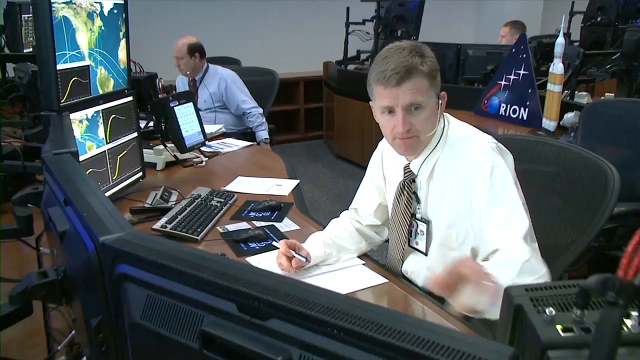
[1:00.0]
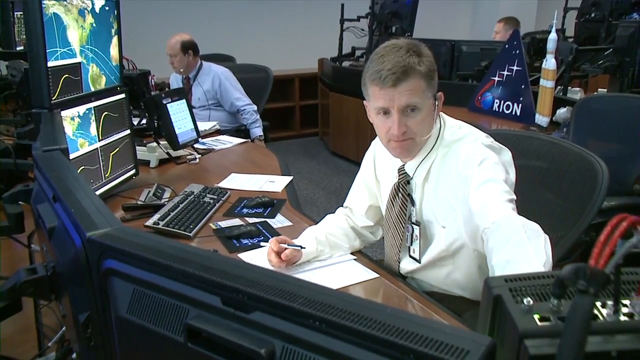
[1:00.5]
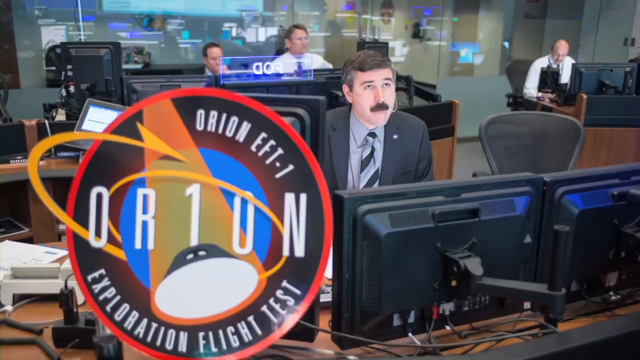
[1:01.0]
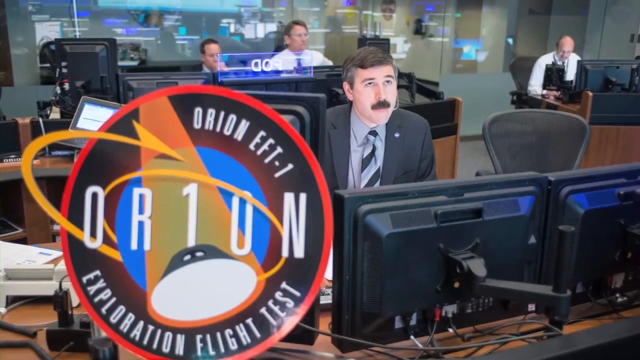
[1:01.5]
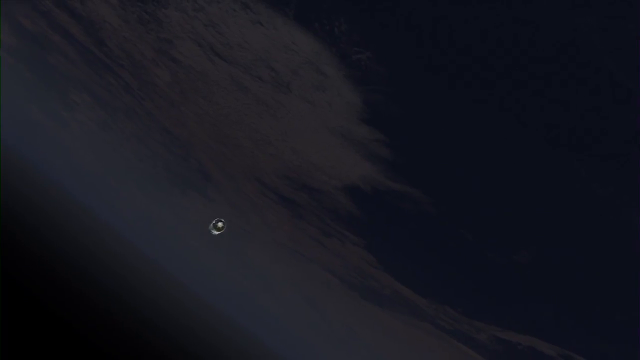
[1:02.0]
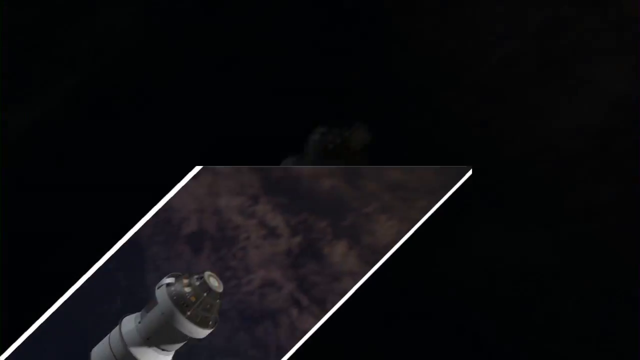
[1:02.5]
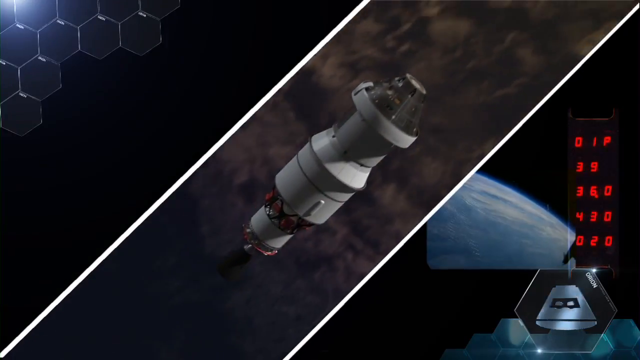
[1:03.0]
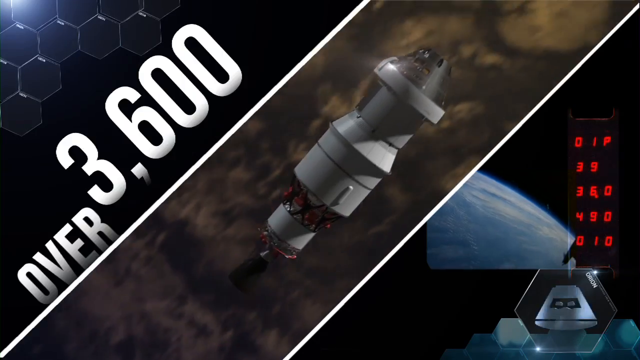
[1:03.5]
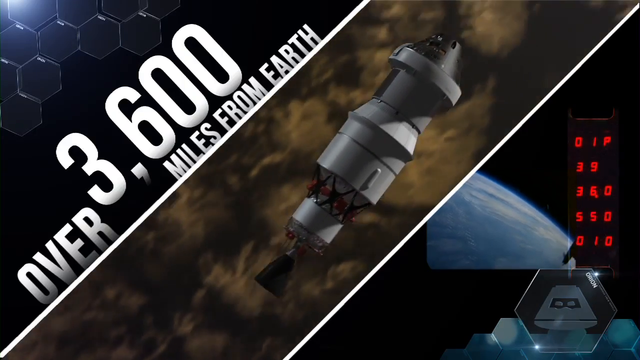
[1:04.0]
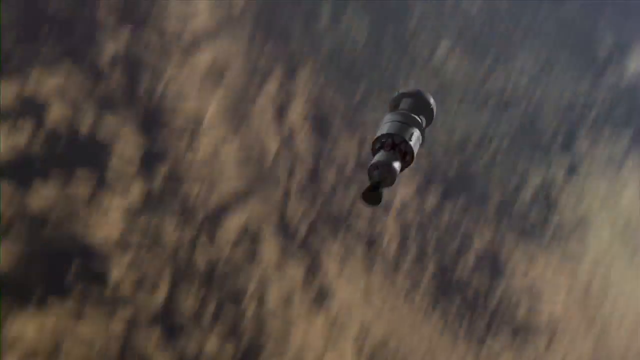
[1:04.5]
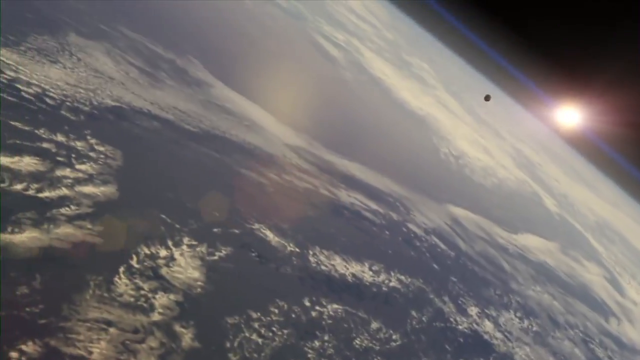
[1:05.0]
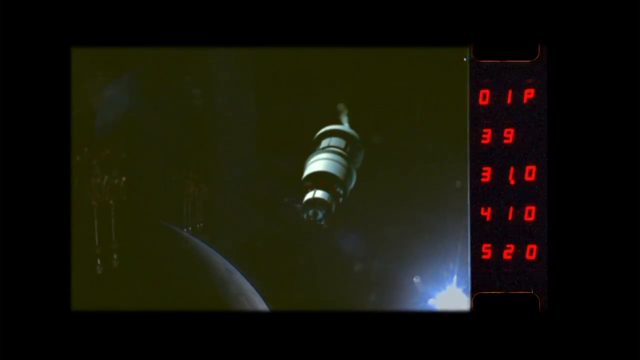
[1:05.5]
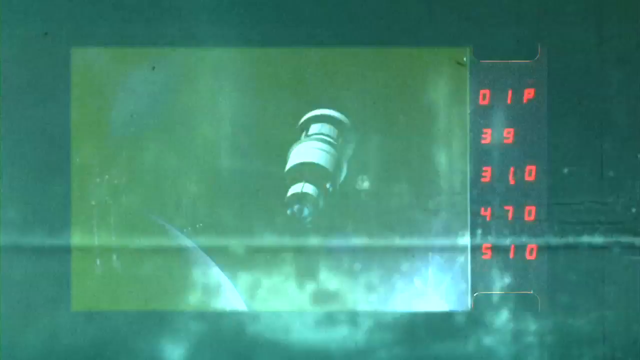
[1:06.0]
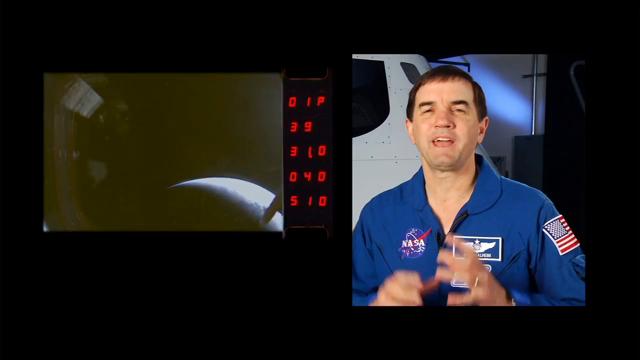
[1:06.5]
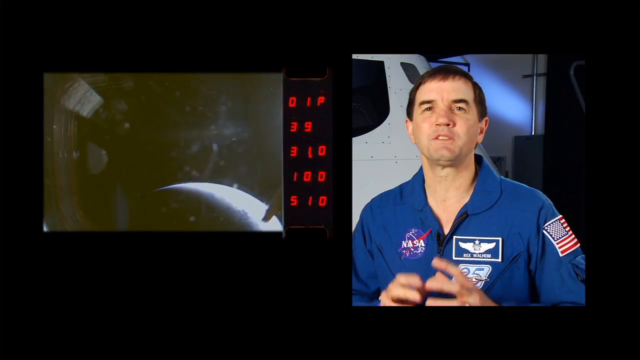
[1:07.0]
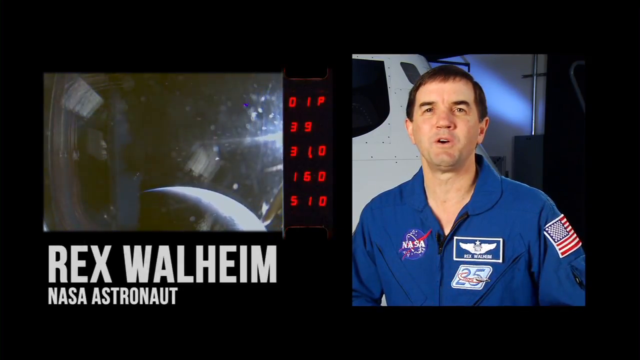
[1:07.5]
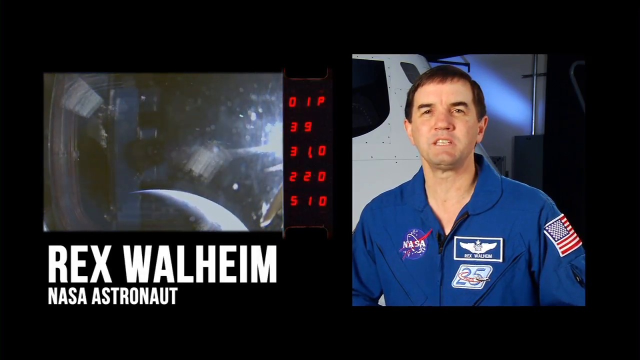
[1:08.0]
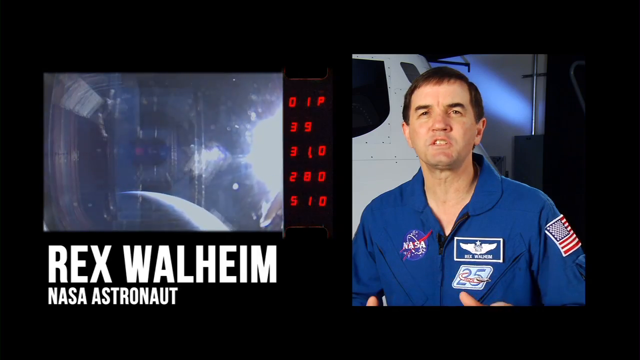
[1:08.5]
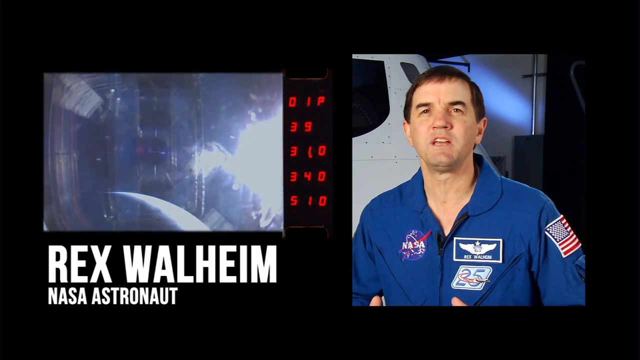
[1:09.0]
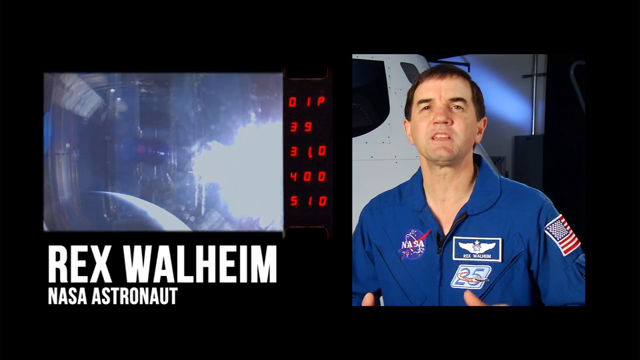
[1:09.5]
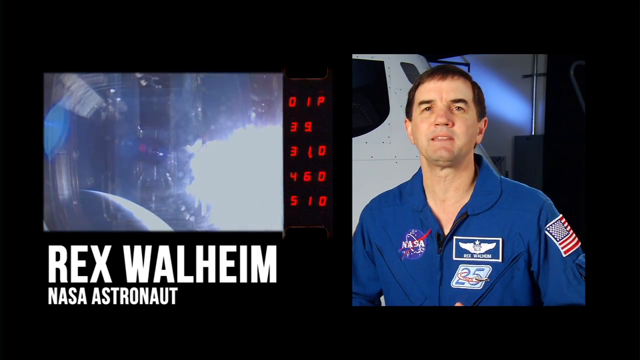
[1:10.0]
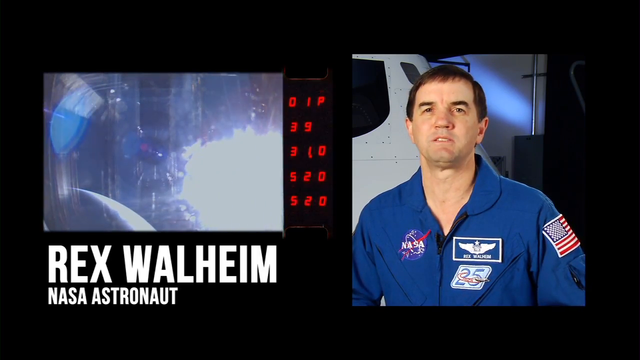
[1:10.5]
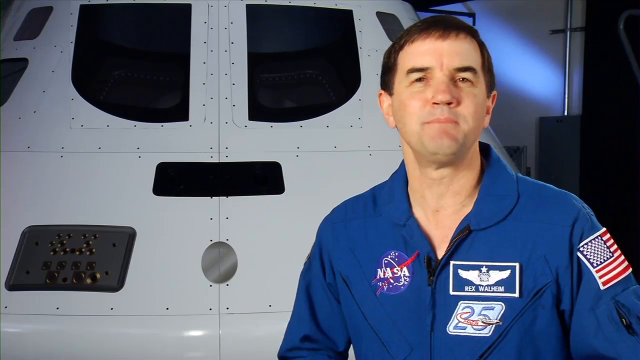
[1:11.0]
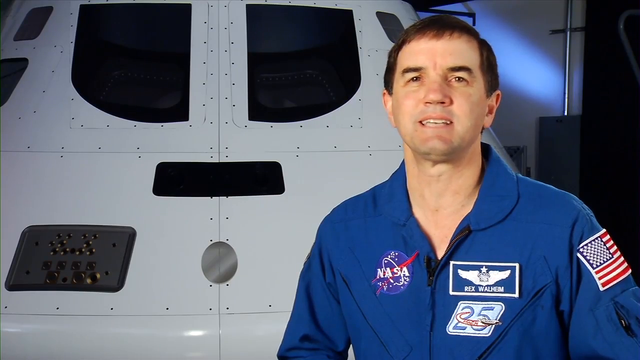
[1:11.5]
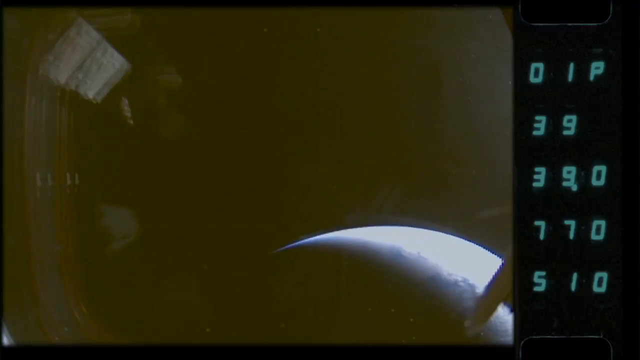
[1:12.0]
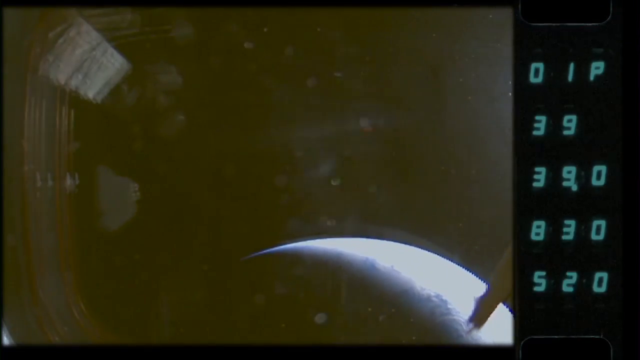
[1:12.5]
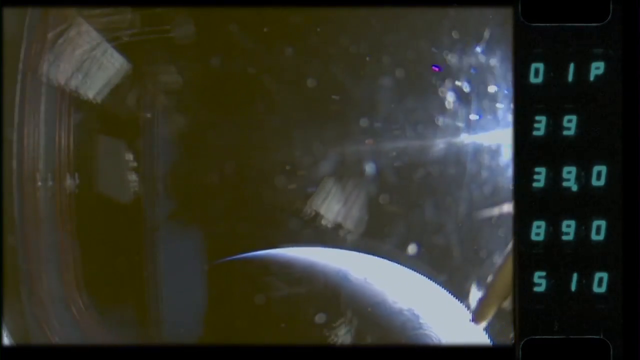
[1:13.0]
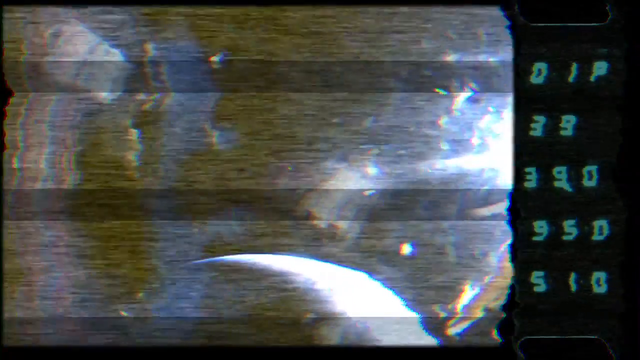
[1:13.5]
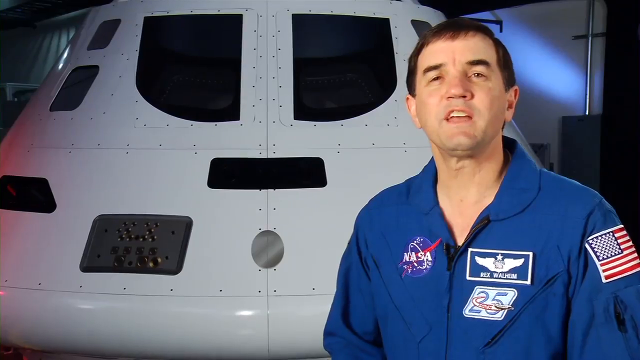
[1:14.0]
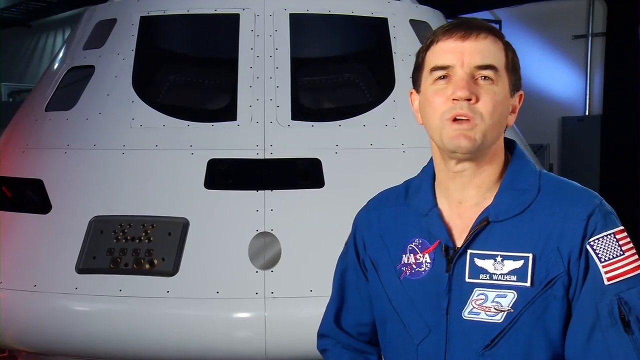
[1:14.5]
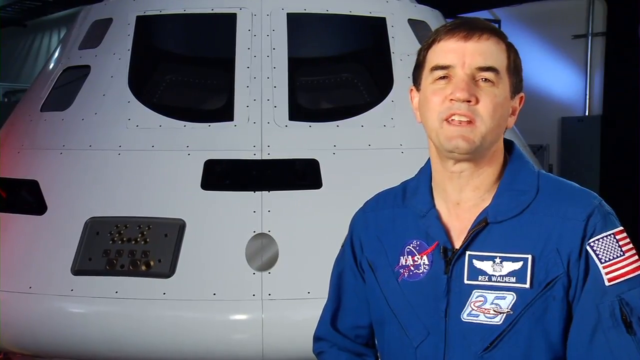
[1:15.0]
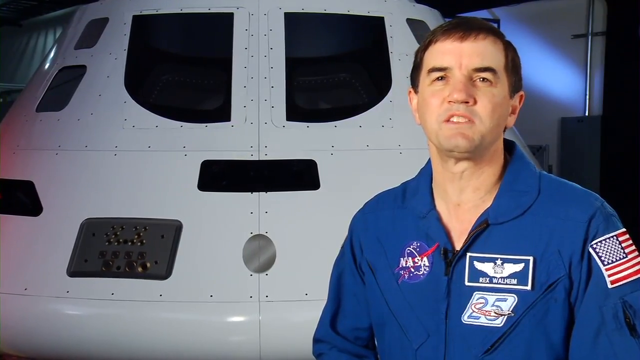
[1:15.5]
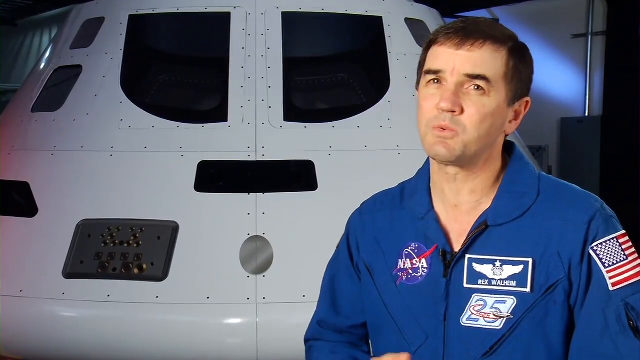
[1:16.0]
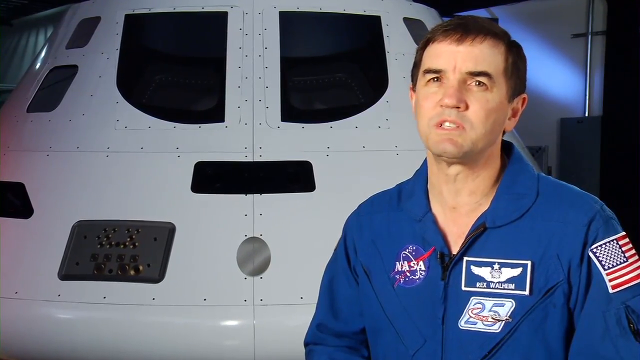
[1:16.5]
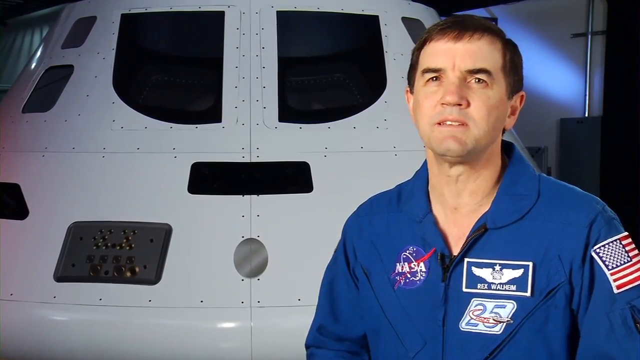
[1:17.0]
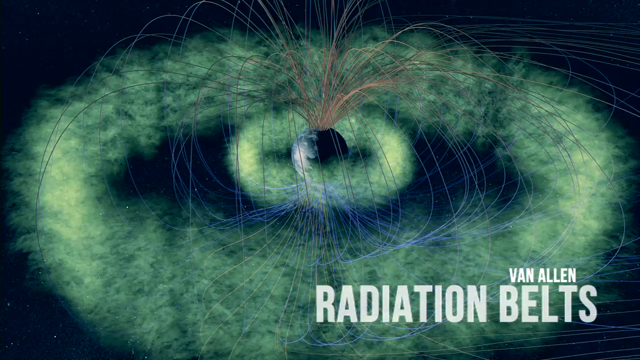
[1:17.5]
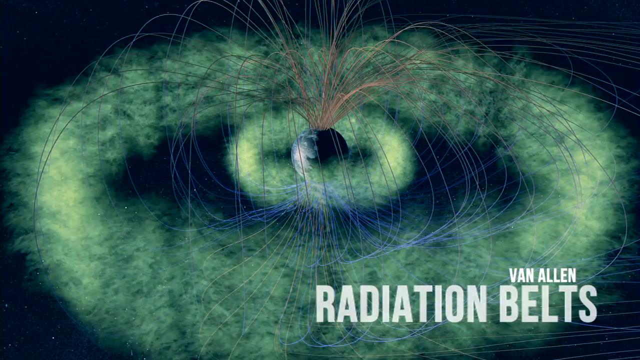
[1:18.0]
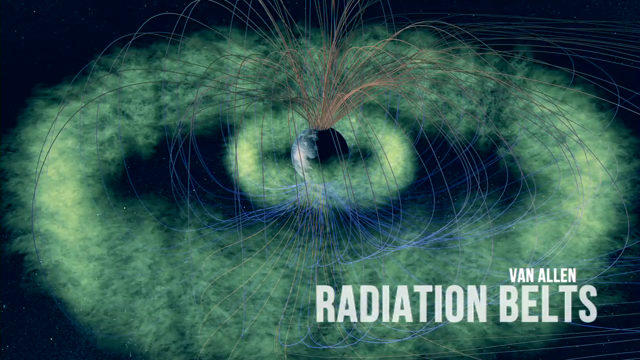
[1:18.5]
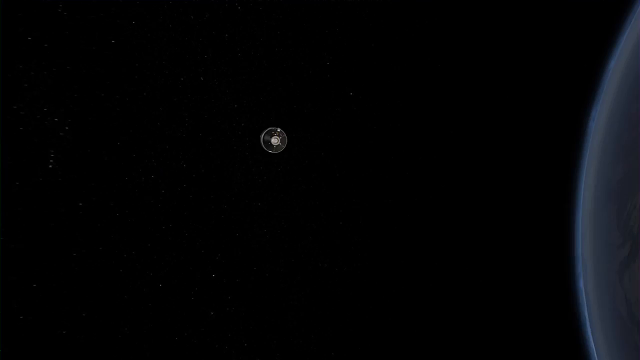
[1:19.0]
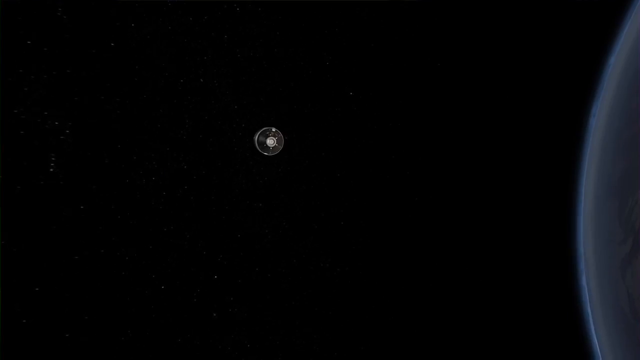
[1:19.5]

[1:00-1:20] A man in a NASA office monitors the launch from several computers. The view switches to another desk, with an Orion EFT-1 banner in the left corner of the frame. A simulation shows the capsule out in space, with text at the side stating that it is currently over 3,600 miles from Earth, along with a simulated view of the capsule going around Earth and various other views. Interview footage follows with NASA astronaut Rex Walheim, who wears a NASA outfit and stands in front of a capsule. Footage filmed directly from the capsule itself is shown, then a simulation of the Van Allen radiation belts in space. The capsule is again shown going around the Earth, with various coloured patterns emanating from it.